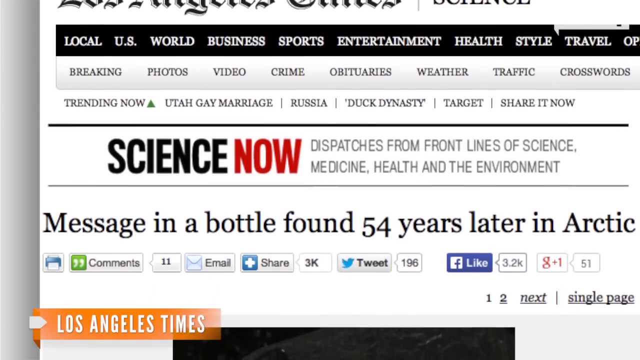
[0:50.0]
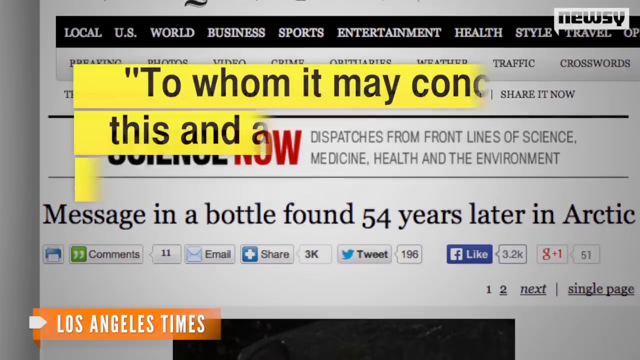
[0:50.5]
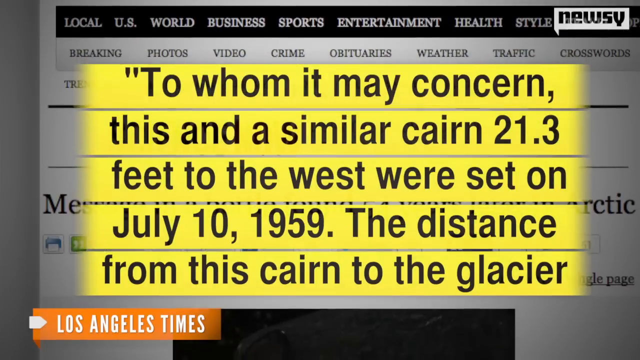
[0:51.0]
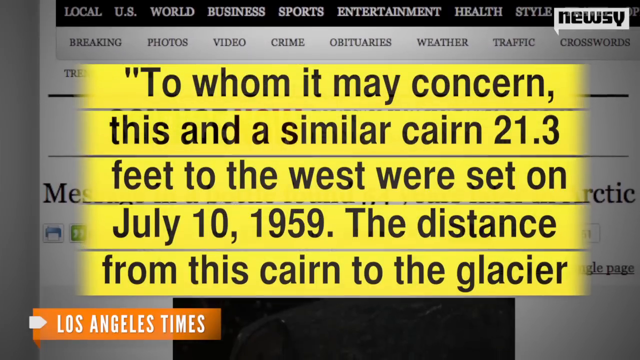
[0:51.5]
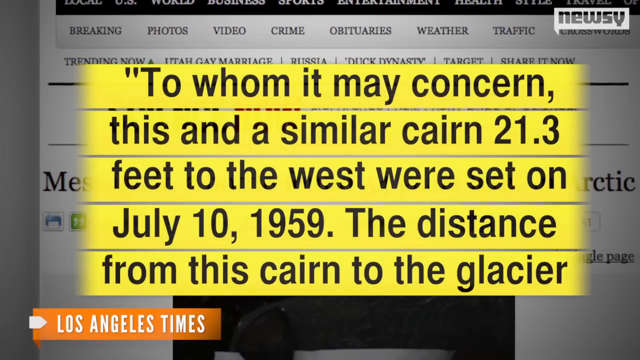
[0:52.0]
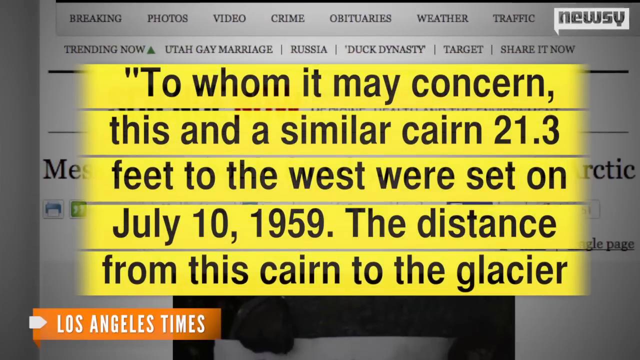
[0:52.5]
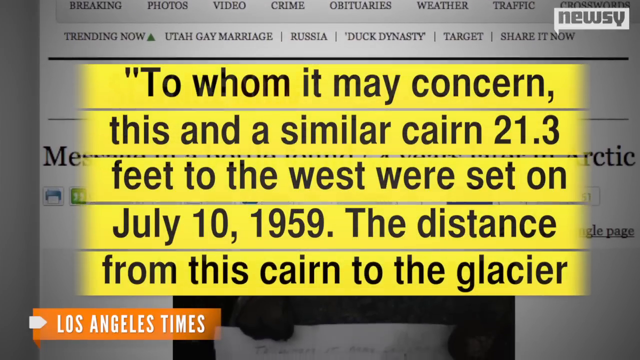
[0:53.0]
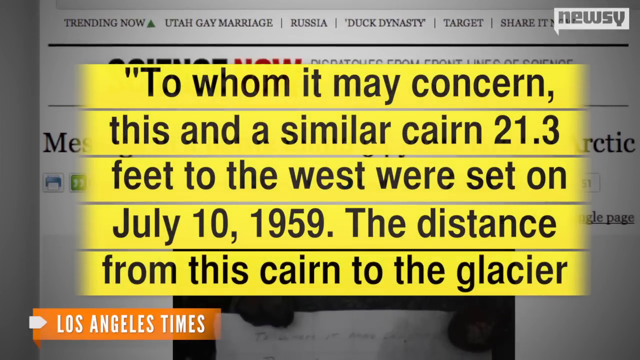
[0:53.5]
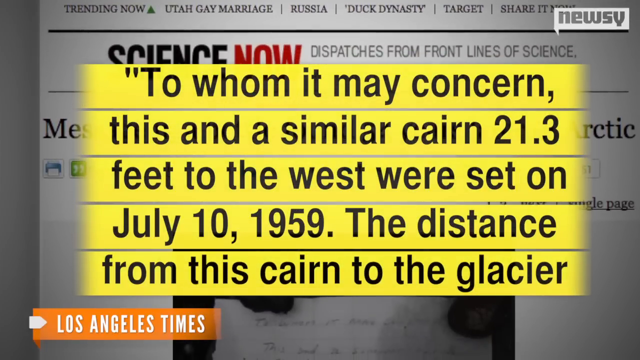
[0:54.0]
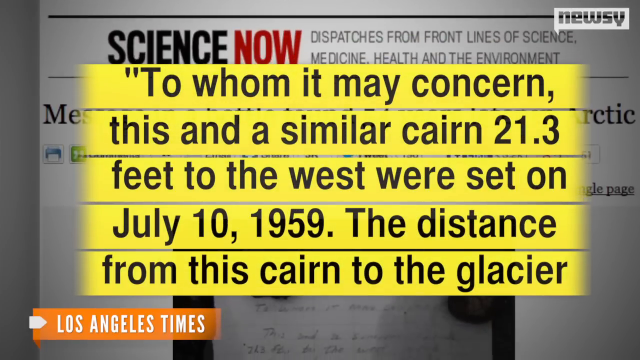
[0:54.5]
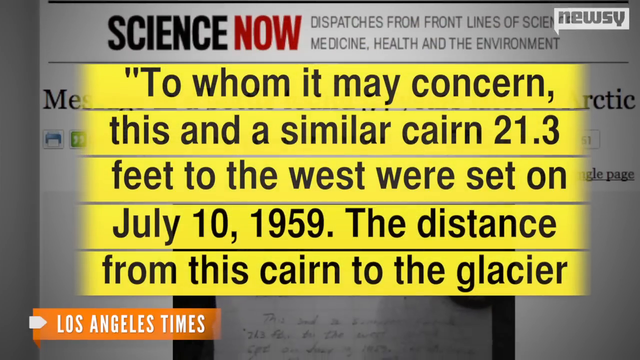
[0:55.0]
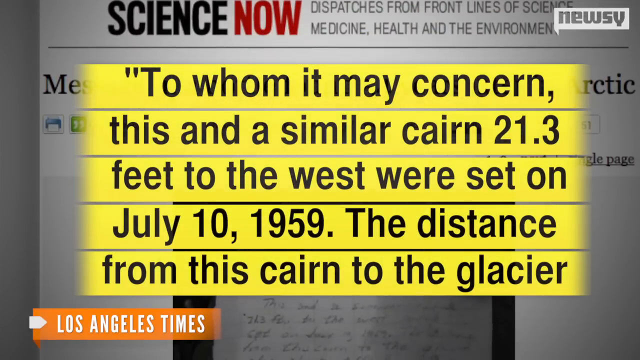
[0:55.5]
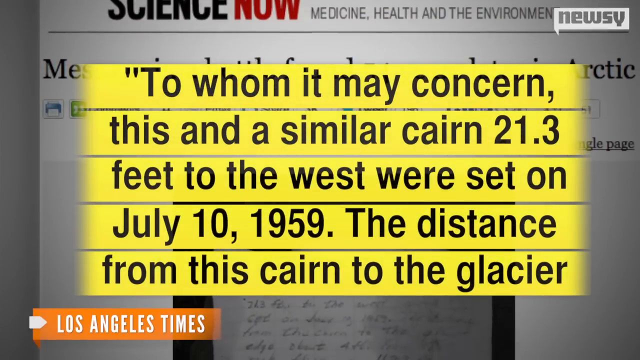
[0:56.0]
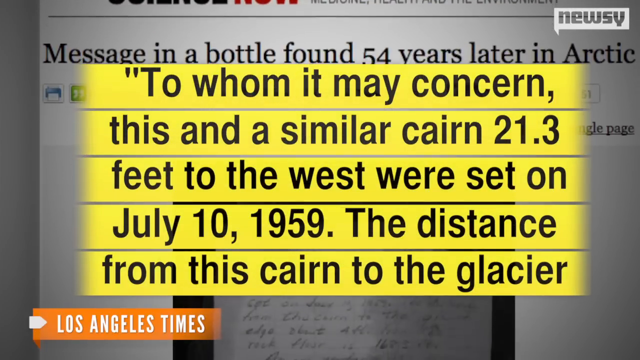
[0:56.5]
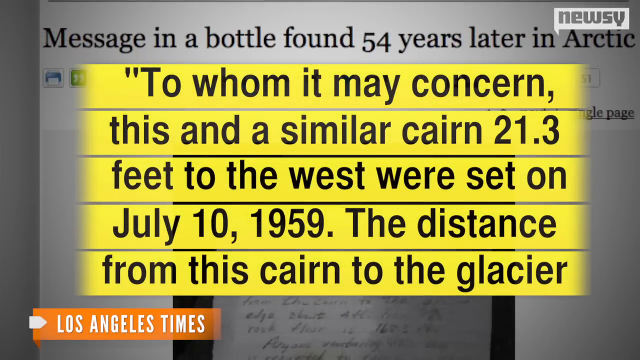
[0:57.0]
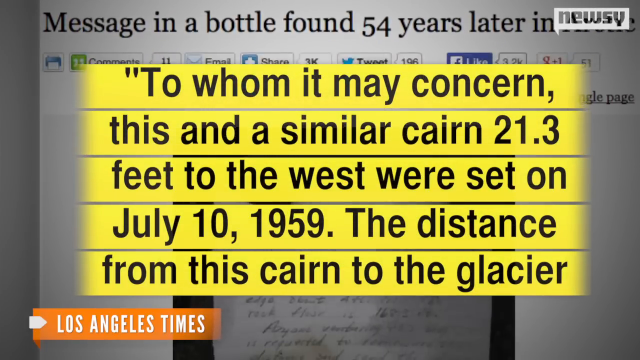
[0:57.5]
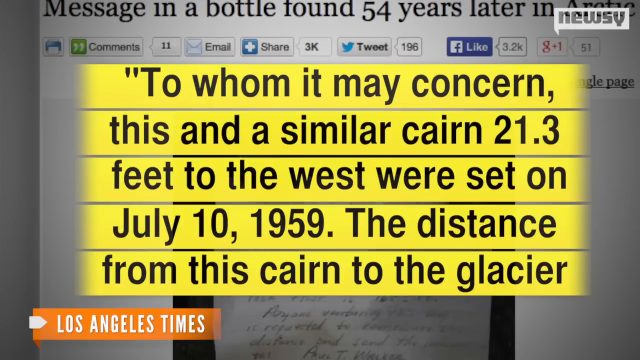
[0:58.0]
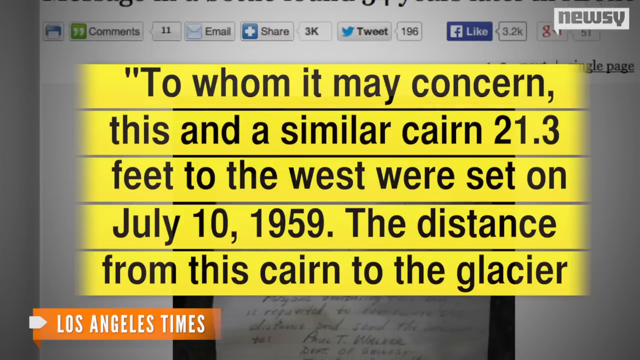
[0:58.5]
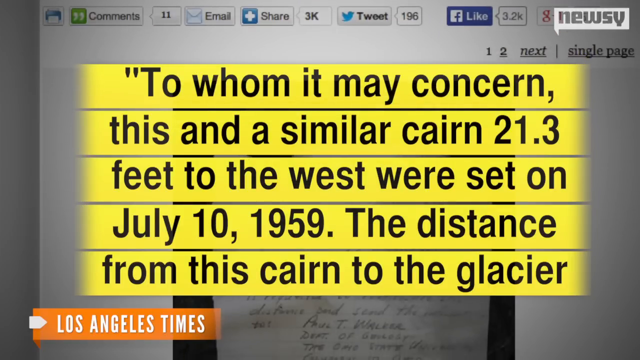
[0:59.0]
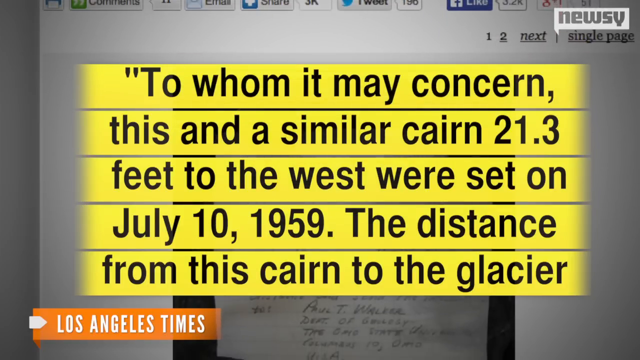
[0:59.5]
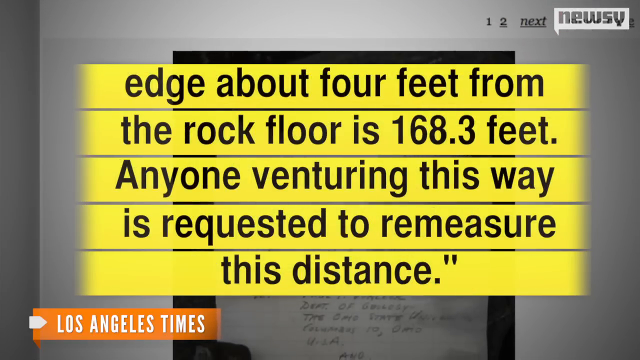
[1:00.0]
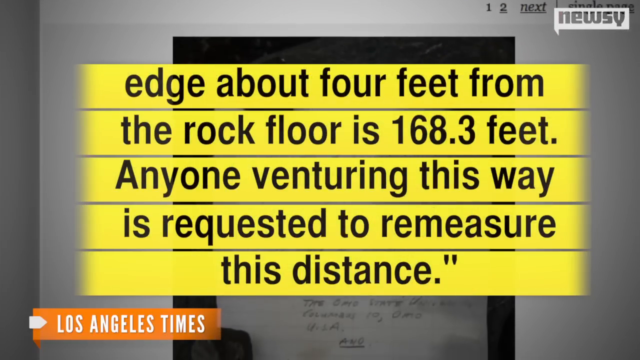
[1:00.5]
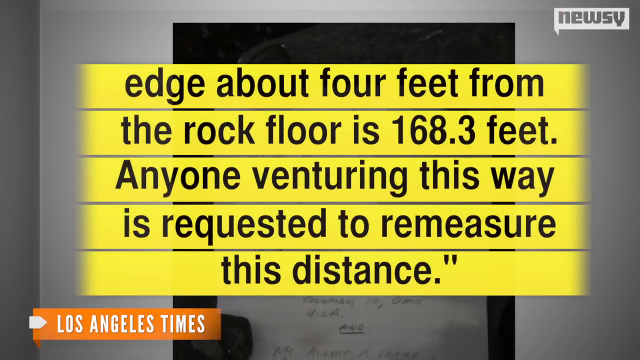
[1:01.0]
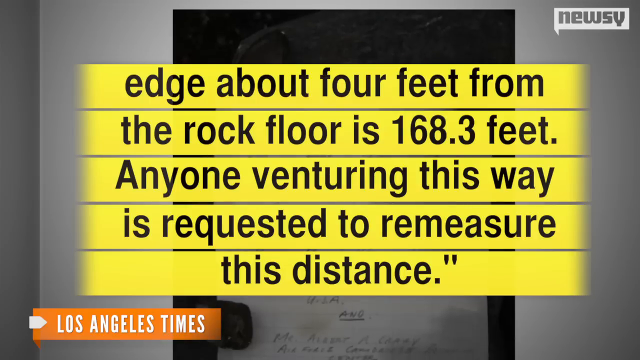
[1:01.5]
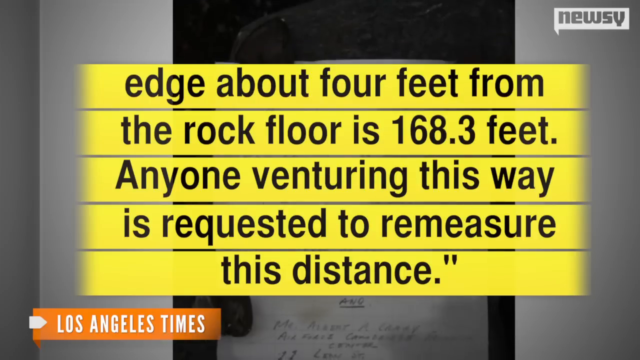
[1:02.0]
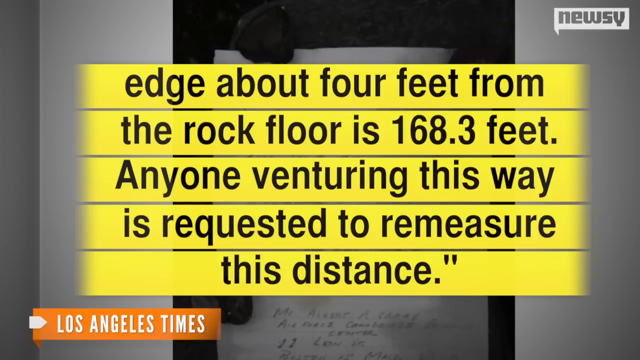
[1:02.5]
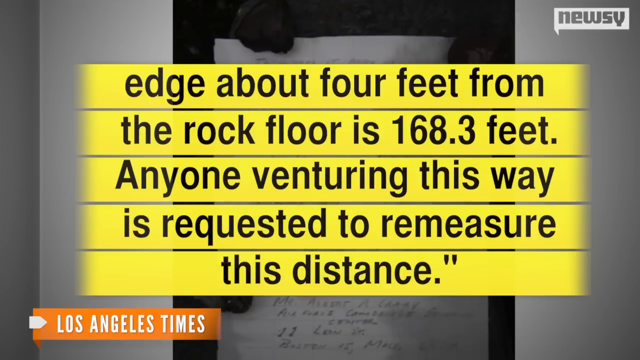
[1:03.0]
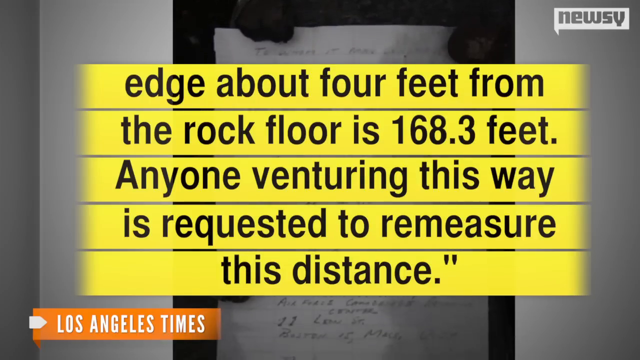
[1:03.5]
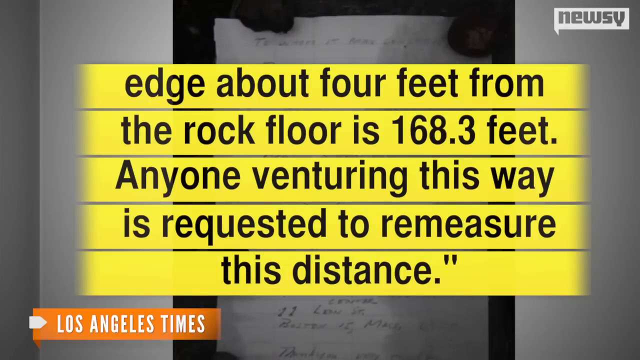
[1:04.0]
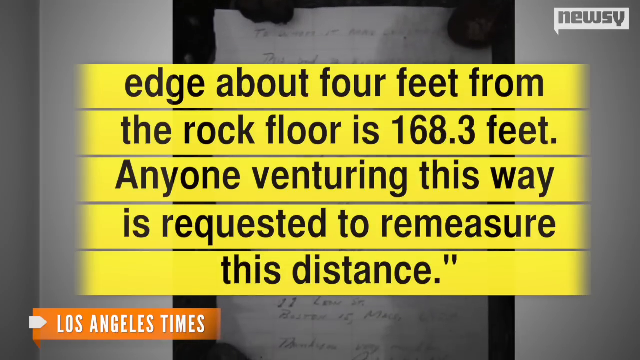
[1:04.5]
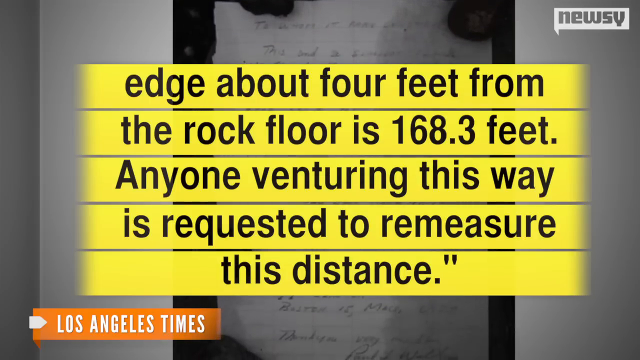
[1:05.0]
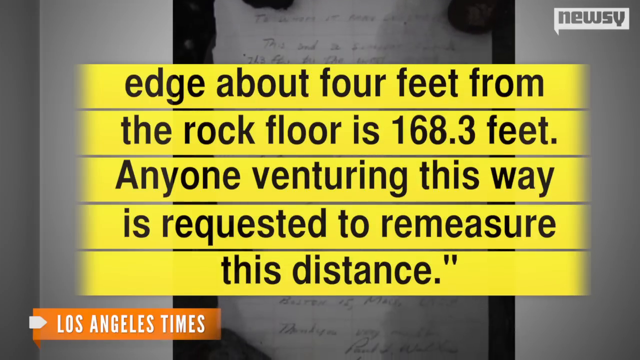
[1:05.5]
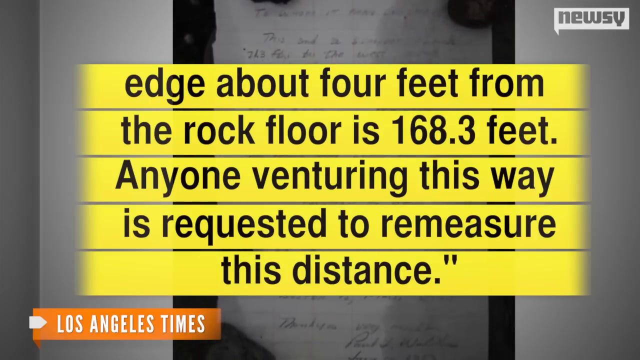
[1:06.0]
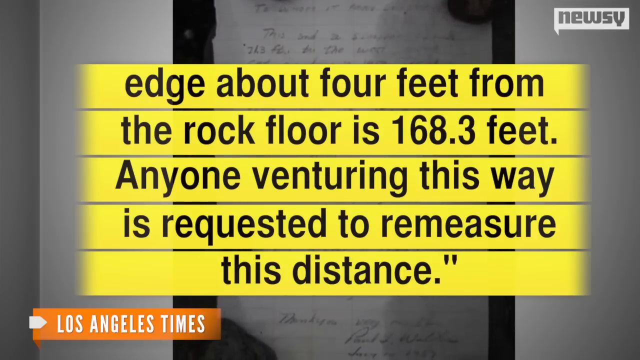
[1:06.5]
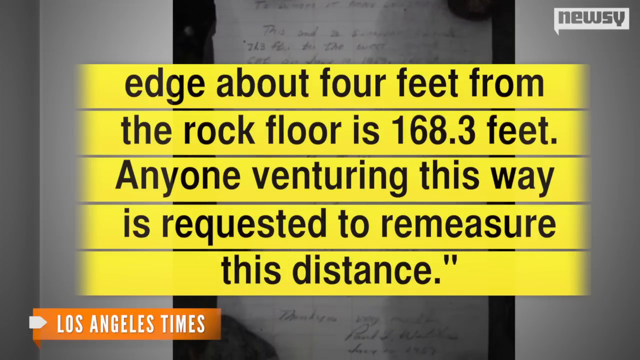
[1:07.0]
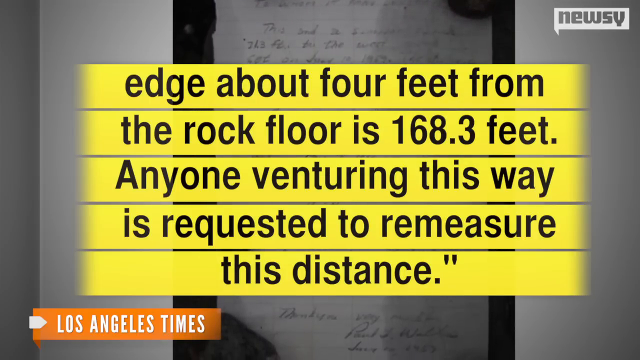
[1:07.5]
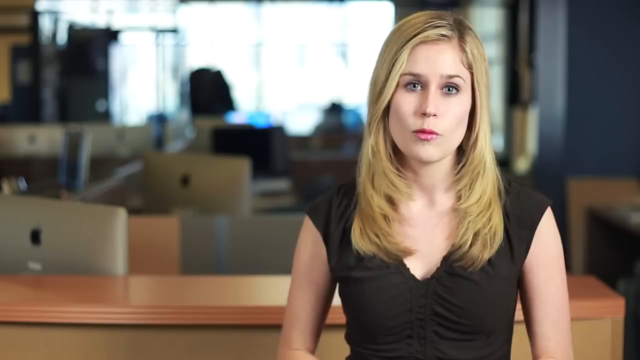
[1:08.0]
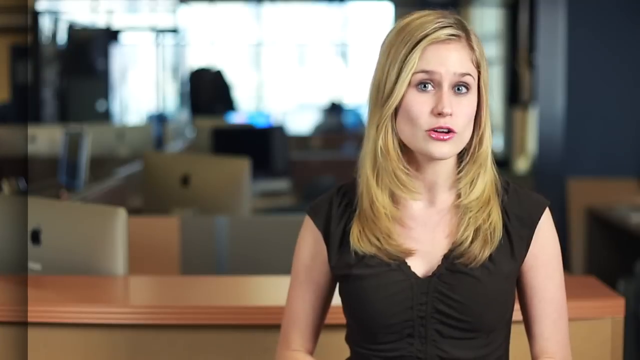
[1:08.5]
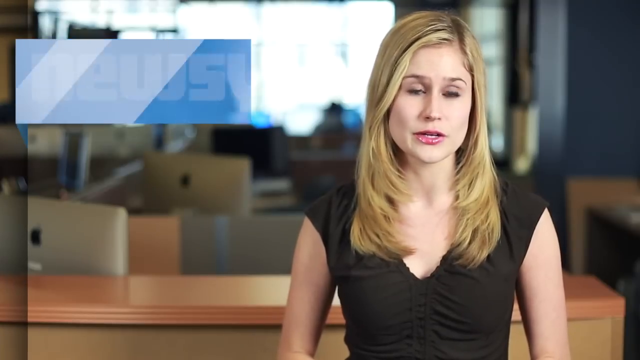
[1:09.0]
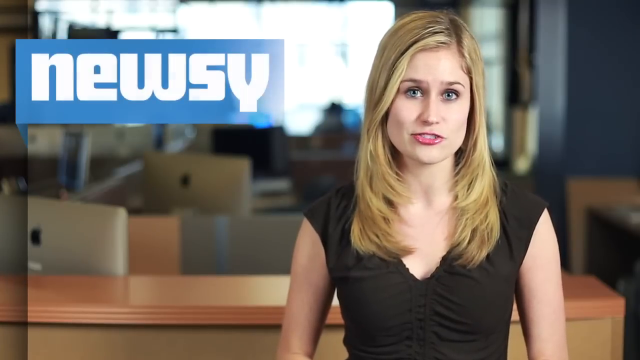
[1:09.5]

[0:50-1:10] As the article scrolls along, a text excerpt pops up on a yellow background, reading: "To whom it may concern, this and a similar cairn, 21.3 feet to the west, were set on July 10, 1959. The distance from this cairn to the glacier edge about 4 feet from the rock floor is 168.3 feet. Anyone venturing this way is requested to remeasure the distance." Behind it, the article continues to scroll down, and around the edges a photo of the letter is visible again in the background. The reporter is then shown once again.